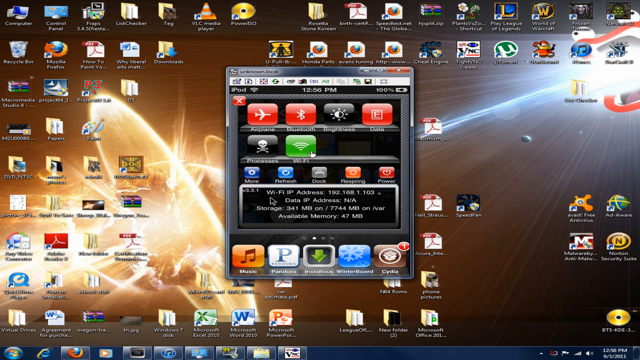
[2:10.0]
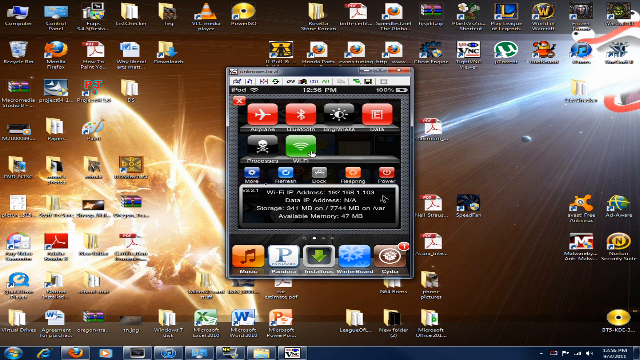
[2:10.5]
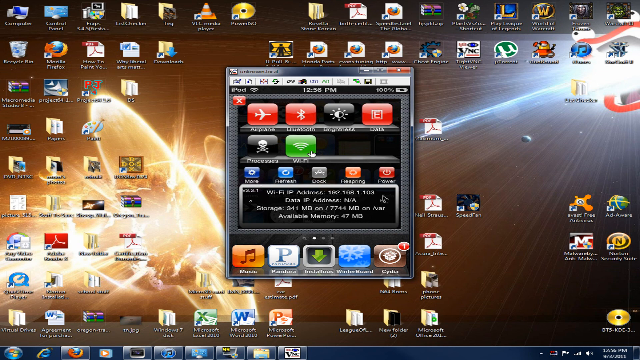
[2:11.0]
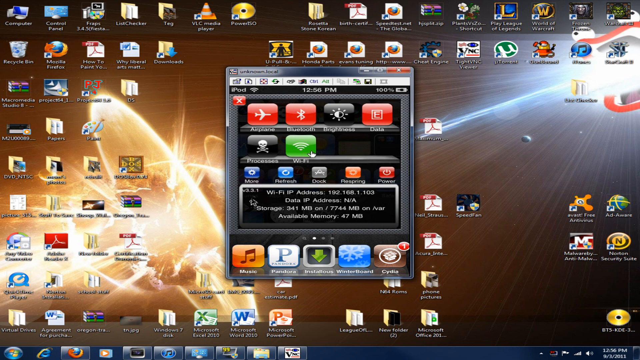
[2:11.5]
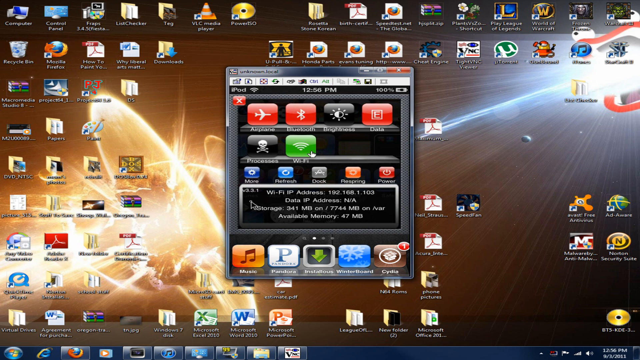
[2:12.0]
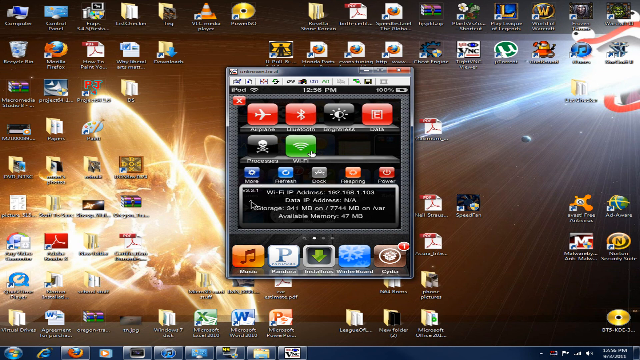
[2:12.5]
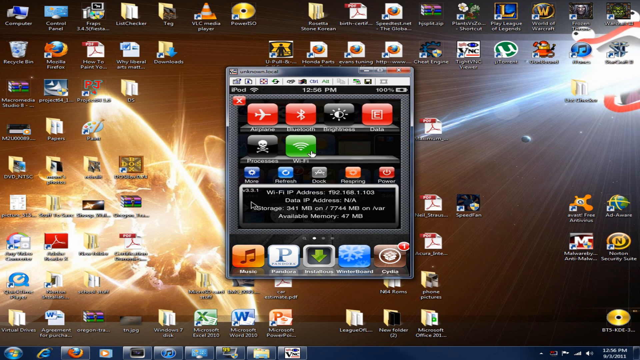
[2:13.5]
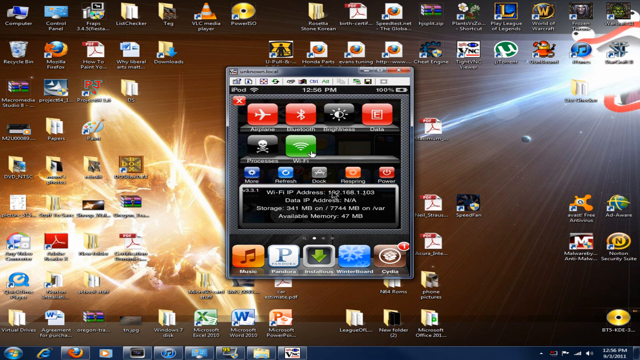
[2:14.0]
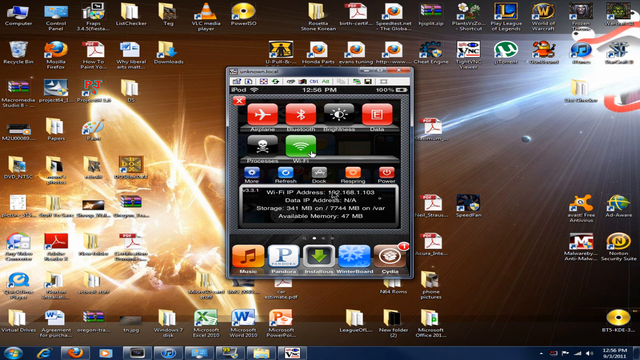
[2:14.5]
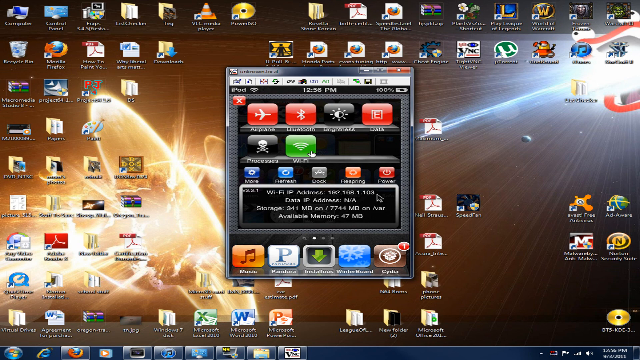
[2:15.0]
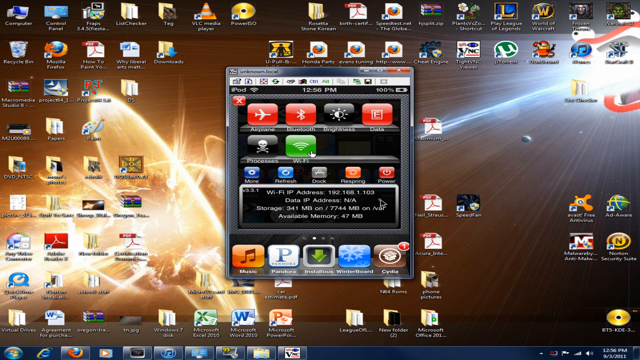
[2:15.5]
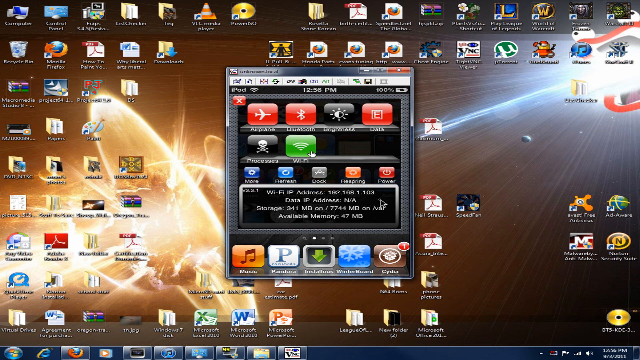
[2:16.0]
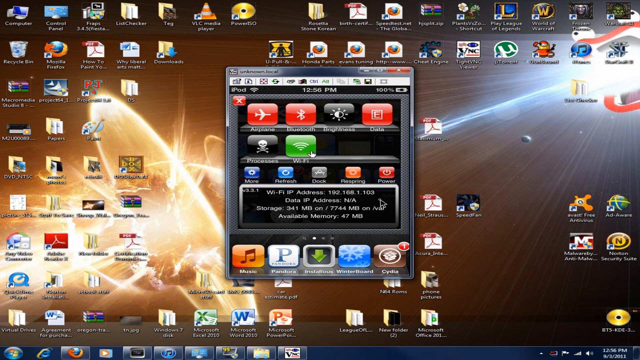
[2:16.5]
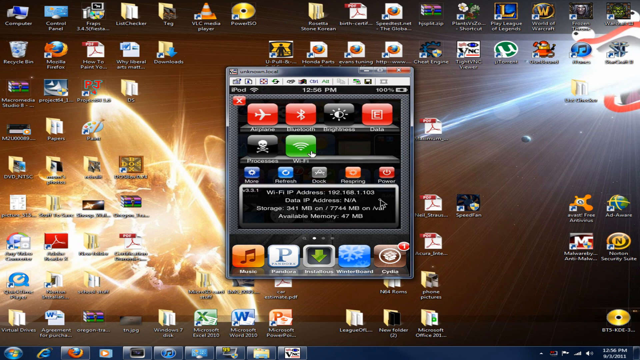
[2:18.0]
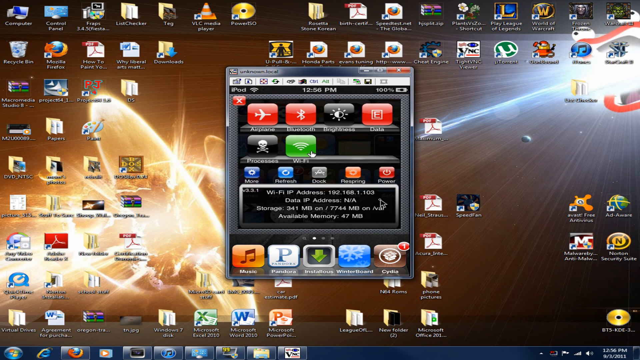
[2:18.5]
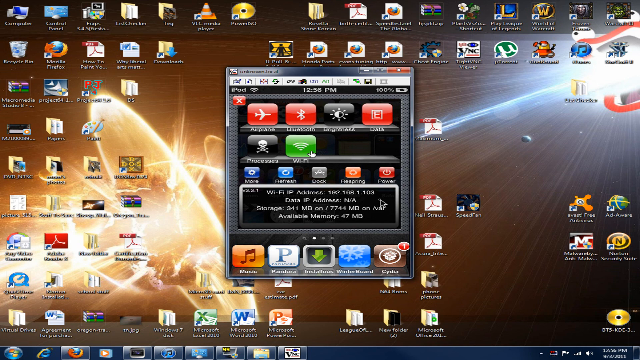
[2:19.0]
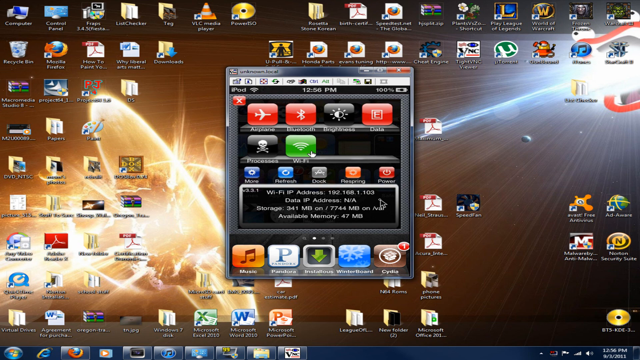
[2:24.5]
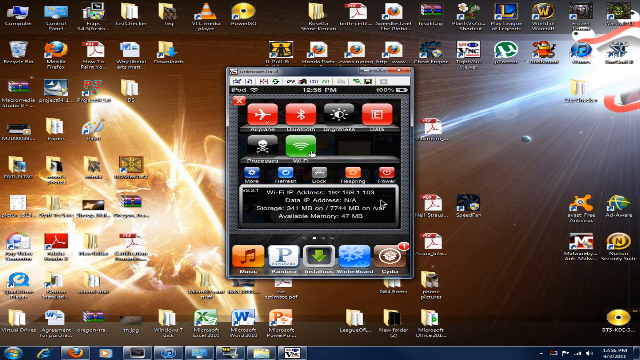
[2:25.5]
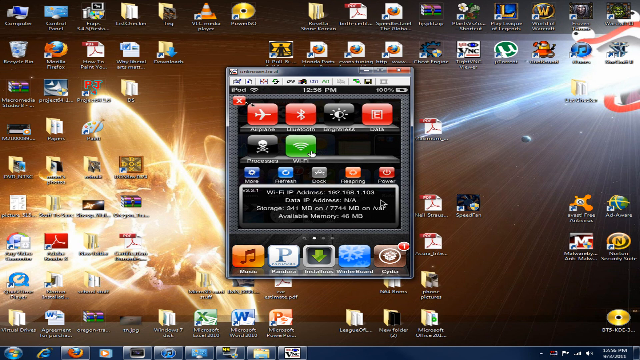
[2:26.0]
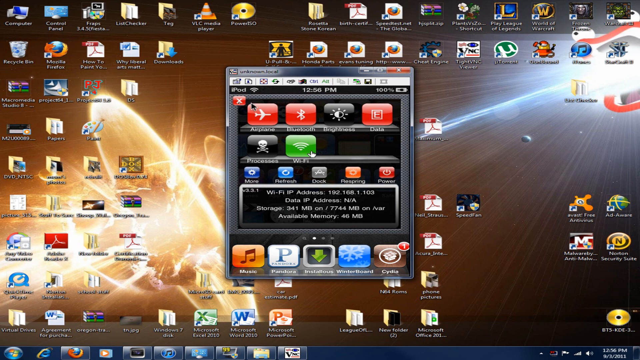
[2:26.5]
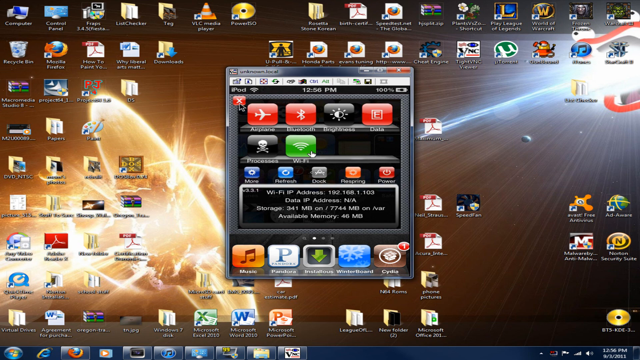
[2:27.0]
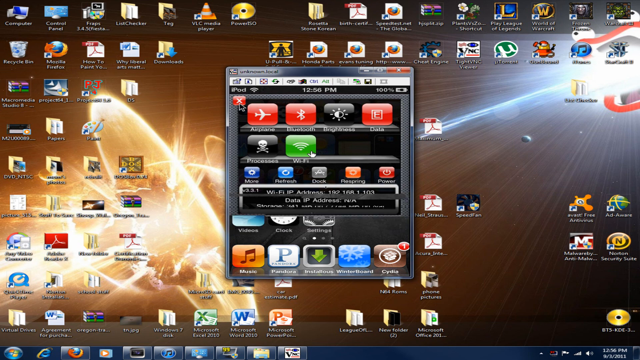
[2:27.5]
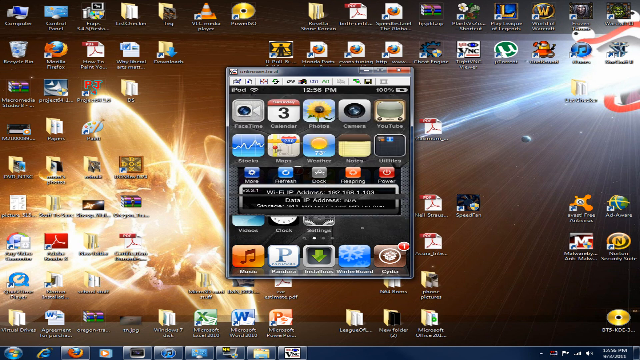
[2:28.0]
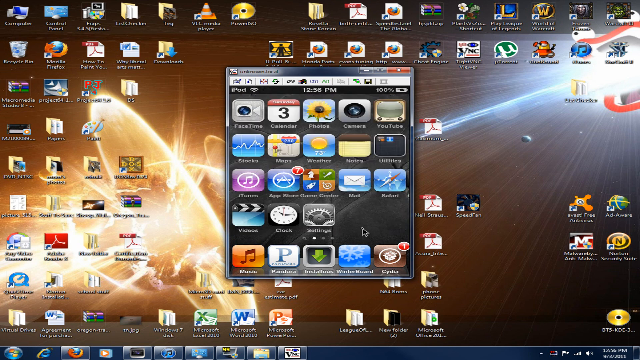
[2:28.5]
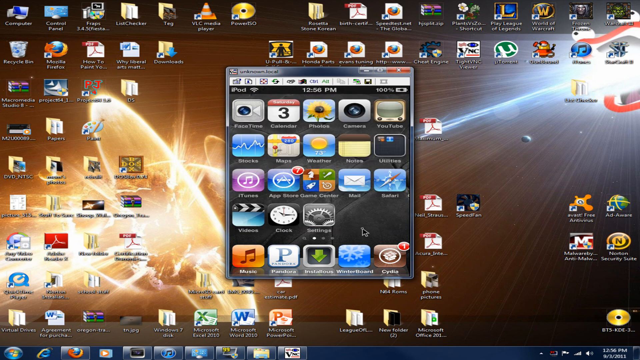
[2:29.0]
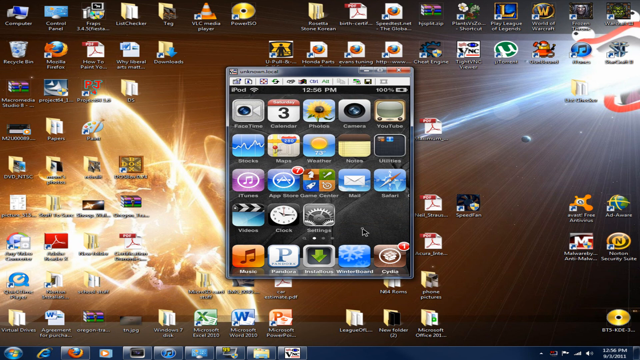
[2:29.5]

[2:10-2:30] A computer screen has about 50 to 60 different icons on it. The wallpaper is black and shows a planet colliding with another planet and exploding, with bright yellow light shining out from around the two planets. In the top right-hand corner of the screen is a bright white light that looks to be a star. In the middle of the screen is a pop-up window; in its top left-hand corner it says "Unknown Local". Underneath are two red buttons, one with an airplane on it and the other with the Bluetooth symbol. To the right of that is a black button with a sun that is half black and half white, and to the right of that a red button with the letter E in the middle. Underneath are a black button with a skull on it and a green button with an internet strength symbol.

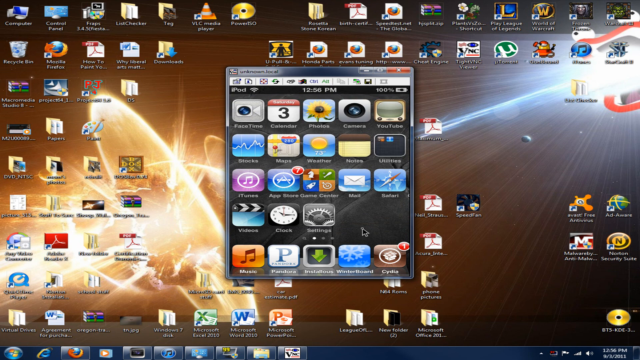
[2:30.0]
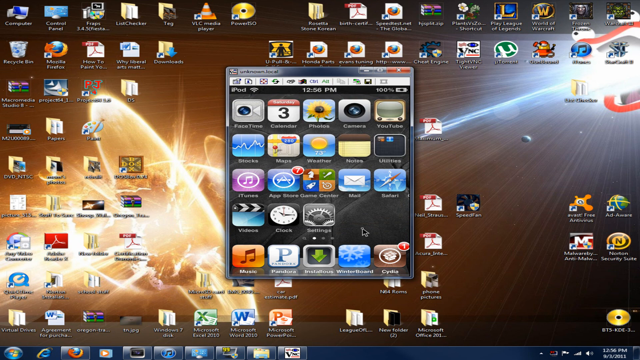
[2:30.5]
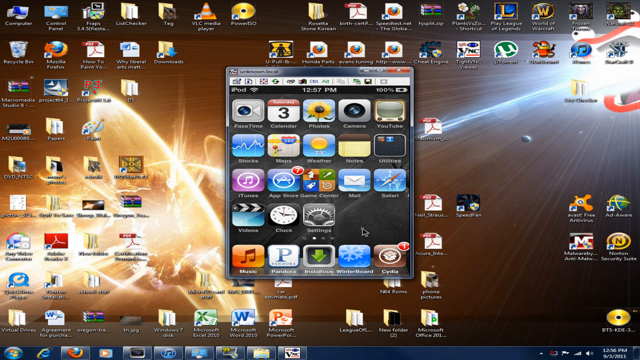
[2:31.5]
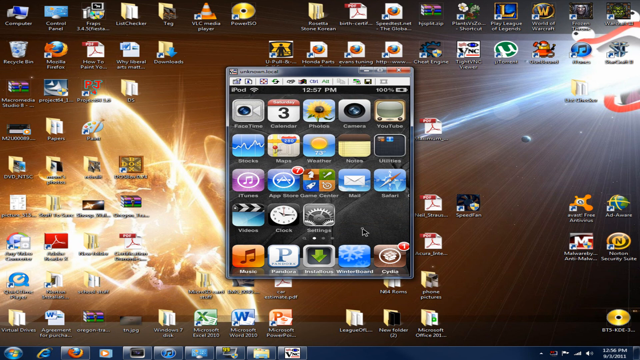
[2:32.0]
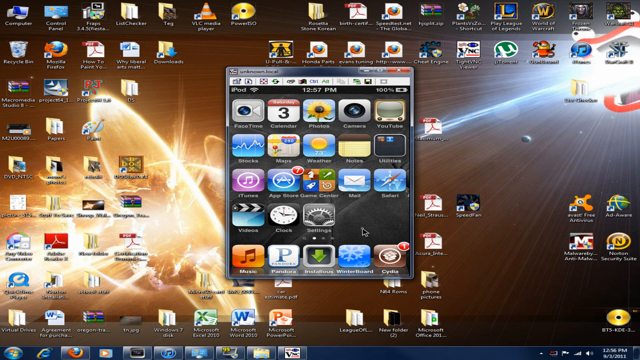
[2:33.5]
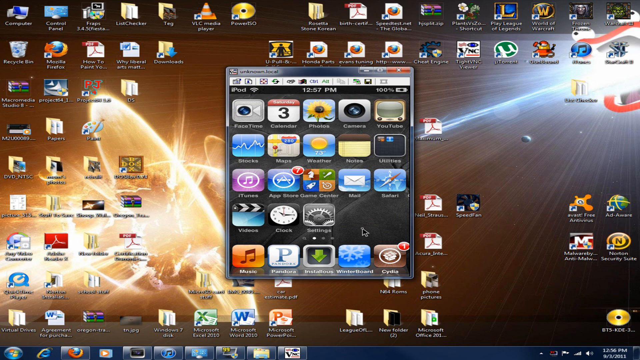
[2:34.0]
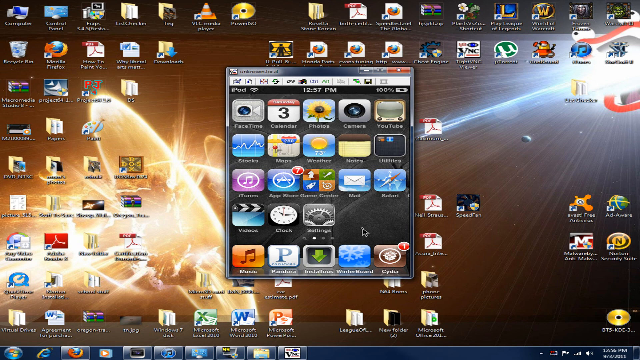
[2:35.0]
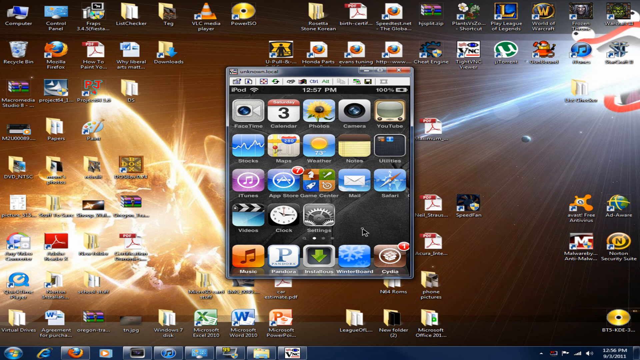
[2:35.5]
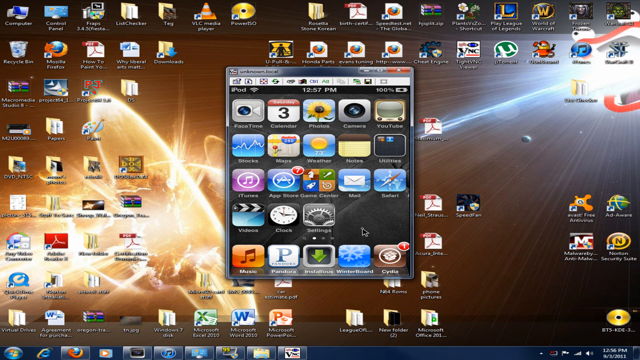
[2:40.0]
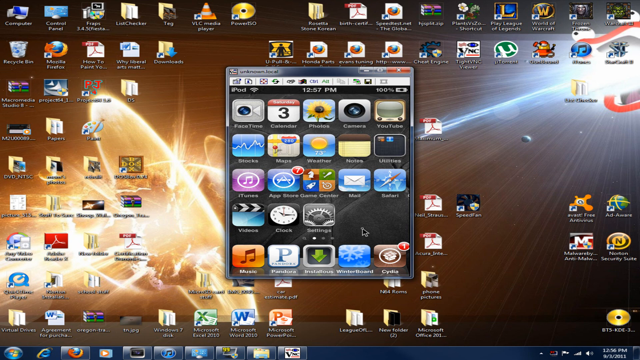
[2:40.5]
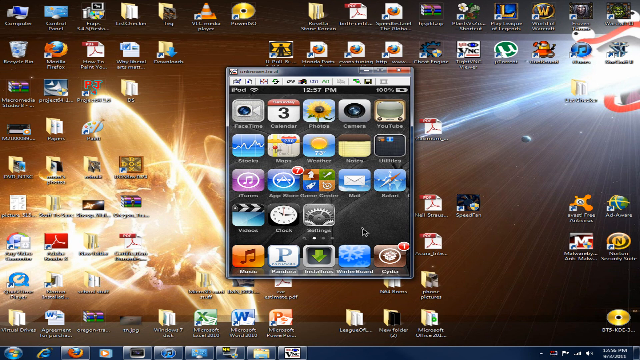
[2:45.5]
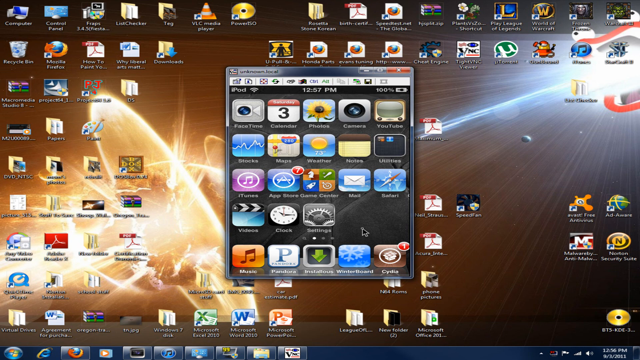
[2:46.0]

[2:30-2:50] A computer screen has a black wallpaper showing a planet colliding with another planet and exploding, with bright yellow and orangish light coming out from around the planet. In the top right-hand corner is a bright white light that looks to be like a star. There are about 50 to 60 icons on the screen. In the middle is a small pop-up window with 23 of its own buttons and icons. Among them are one with a video camera, one with a number three, one with a sunflower, a purple button with a music sign, an orange button with a music sign, a button with the letter P, a button with a down green arrow, and a blue button with a white snowflake.